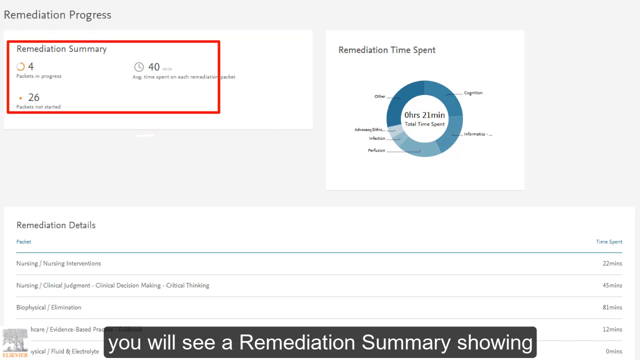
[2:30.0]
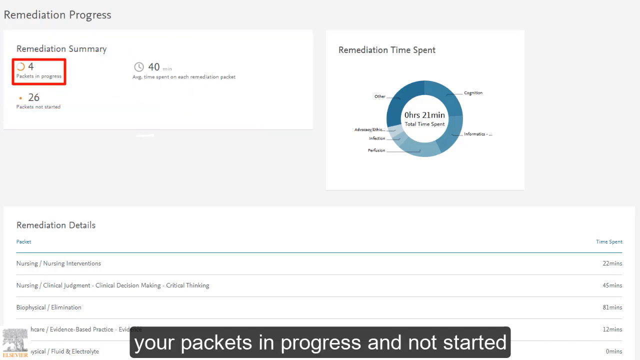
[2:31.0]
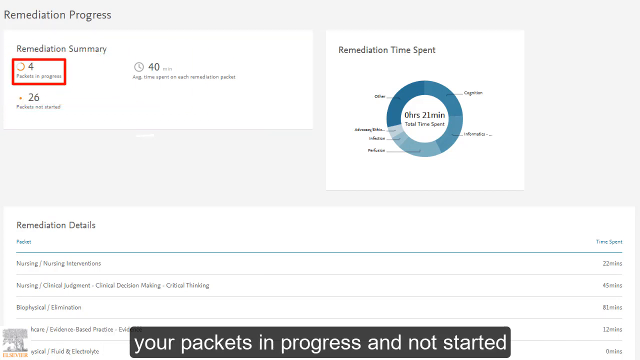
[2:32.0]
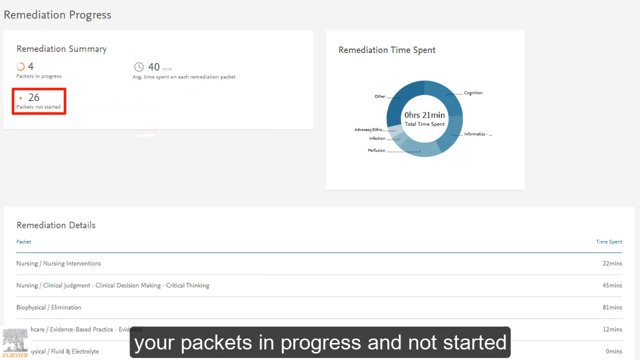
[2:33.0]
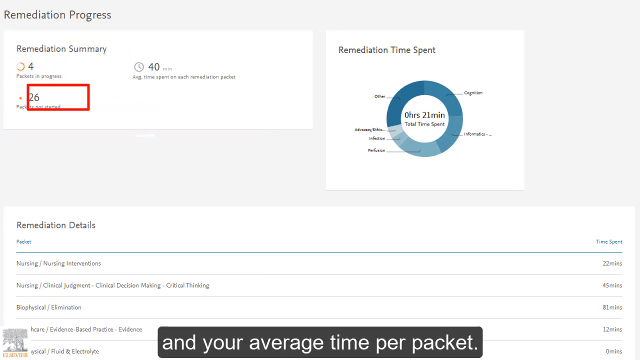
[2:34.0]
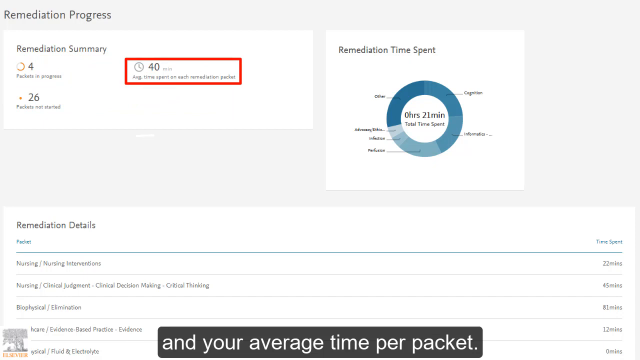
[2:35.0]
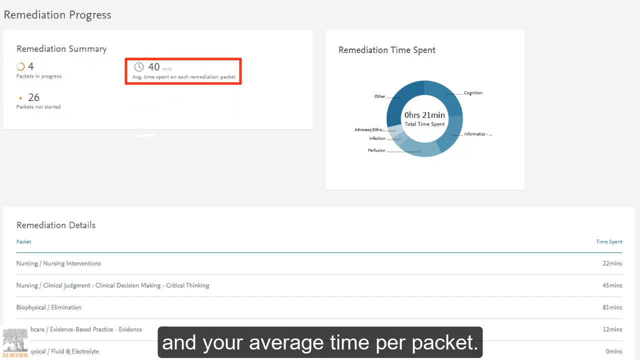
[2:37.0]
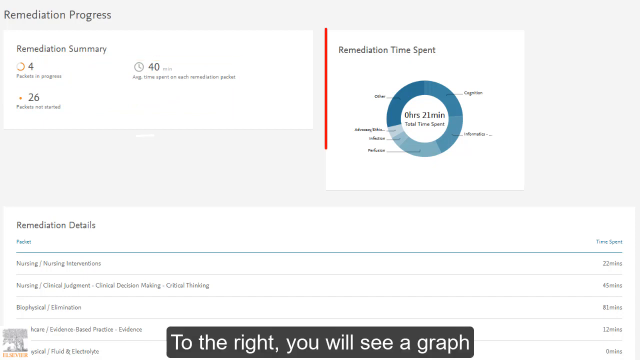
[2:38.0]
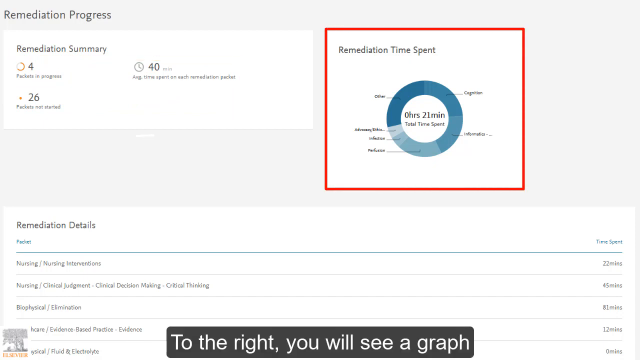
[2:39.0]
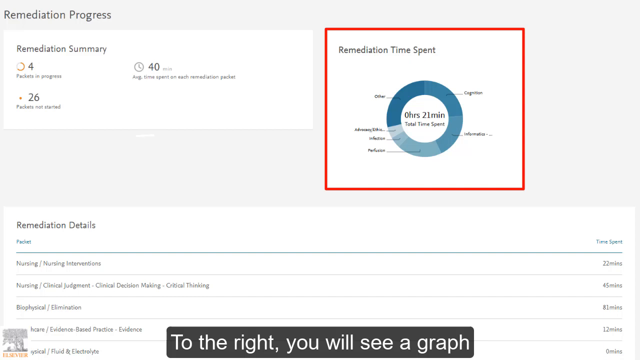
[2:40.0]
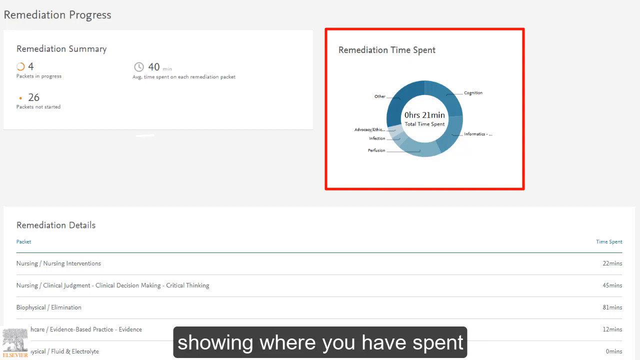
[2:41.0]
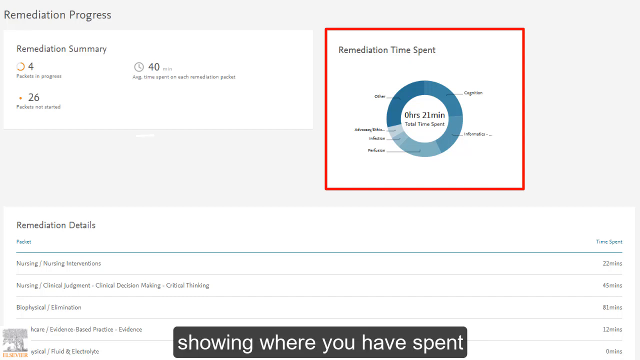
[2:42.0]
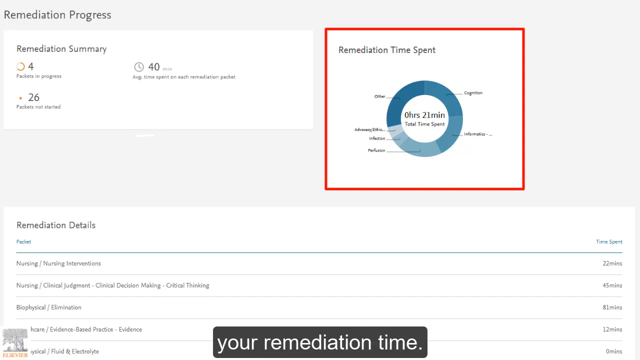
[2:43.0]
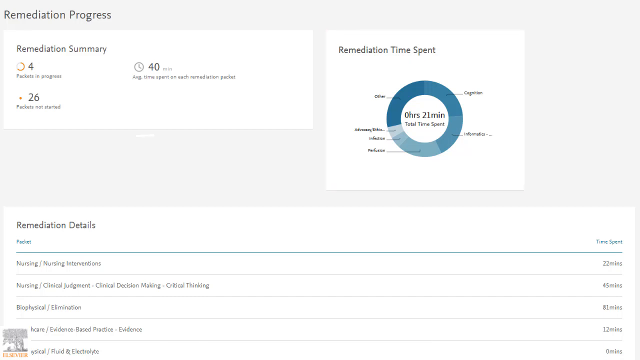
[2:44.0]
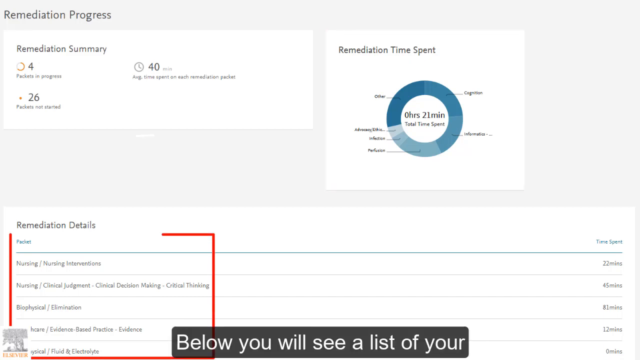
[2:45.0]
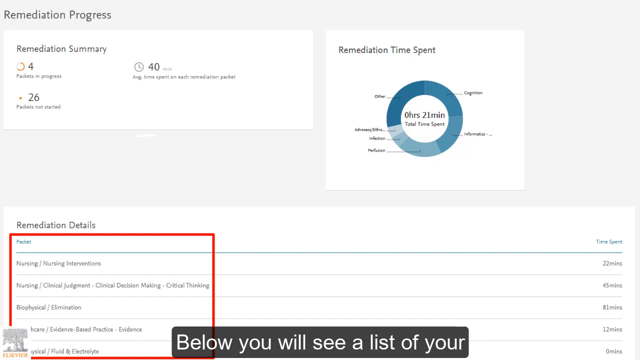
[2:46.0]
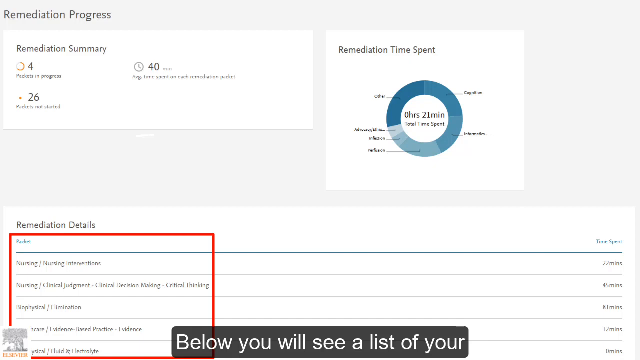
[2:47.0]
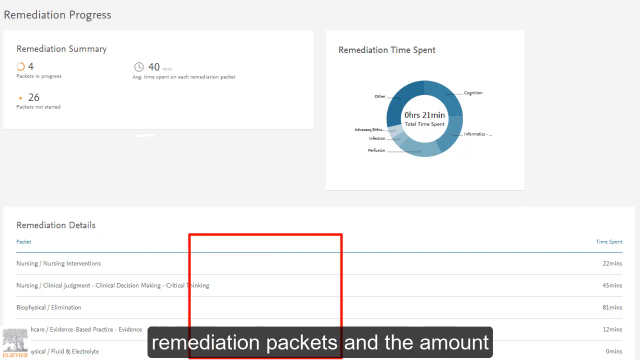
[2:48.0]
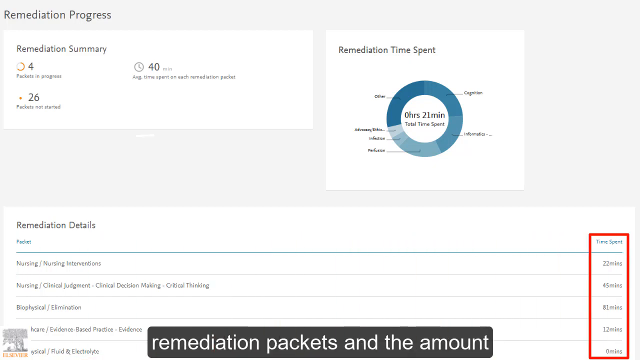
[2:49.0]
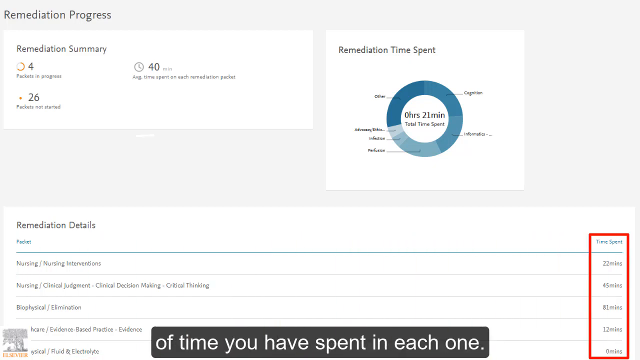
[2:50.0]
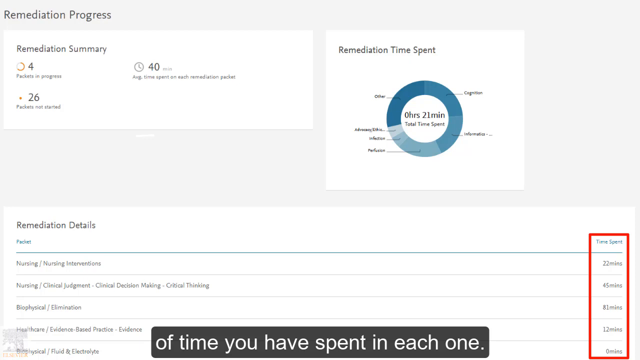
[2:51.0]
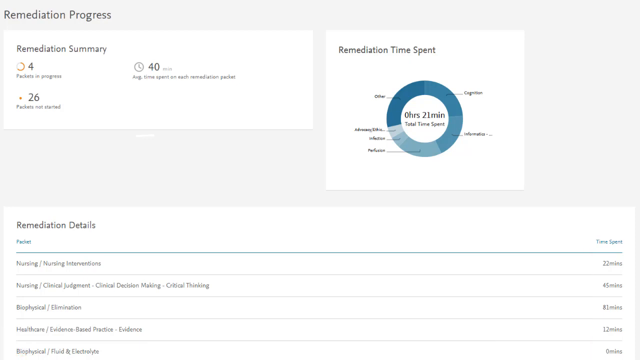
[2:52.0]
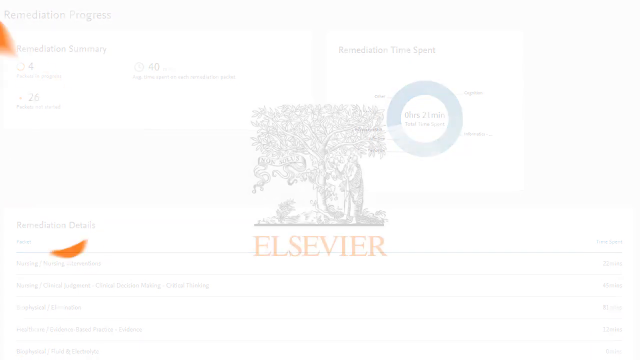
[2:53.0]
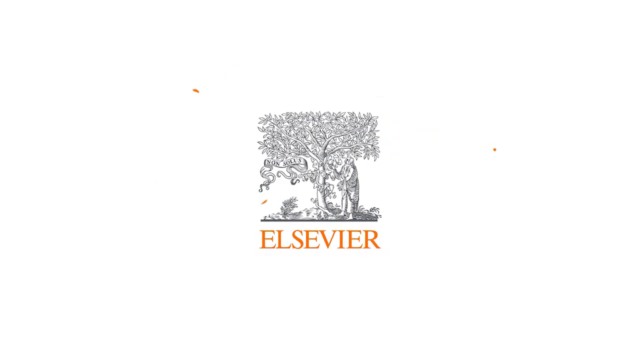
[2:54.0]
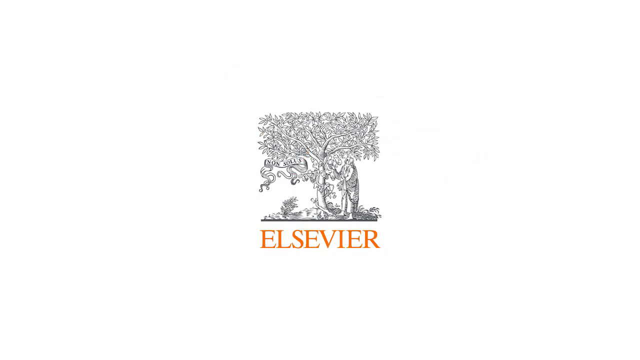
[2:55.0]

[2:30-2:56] The remediation summary shows four packets in progress, 26 packets not started, and an average time of 40 minutes spent on each remediation package. Remediation details list packets including nursing intervention, a total of 454 for healthcare safety, Essential 10 Nursing Intervention with a HESI score of 461, and Clinical Judgment with a HESI score of 194. Text reads "This book is for adults" and "Fundamentals of Nursing." Further text reads "Once you are actively engaged in the content, HESI tracks your remediation time. Content will be checked off as you complete each piece. Your time will be listed on each remediation package as well as a total time at the top of the page. To view additional information about your remediation progress, click Exam Results in the left column. At the bottom of your exam results, you will see a remediation summary showing your package in progress and not started and your average time per package. To the right, you will see a graph showing where you have spent your remediation time. Below, you will see a list of your remediation packets and the amount of time you have spent in each one." The video ends with "Presented by Elsevier."